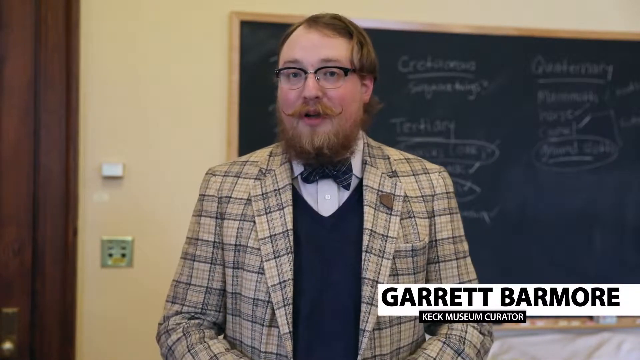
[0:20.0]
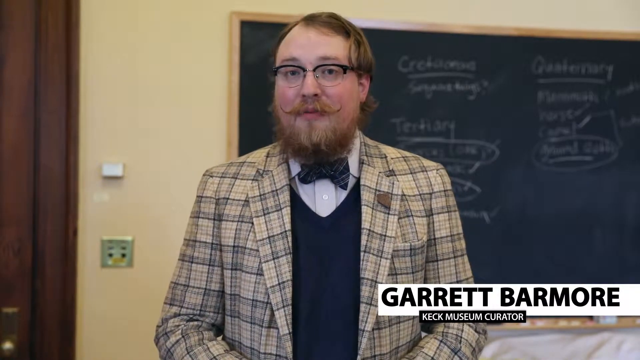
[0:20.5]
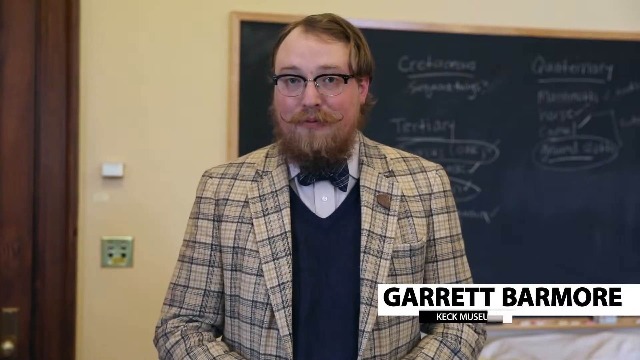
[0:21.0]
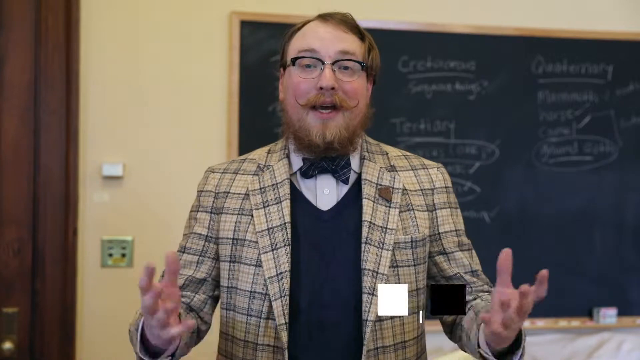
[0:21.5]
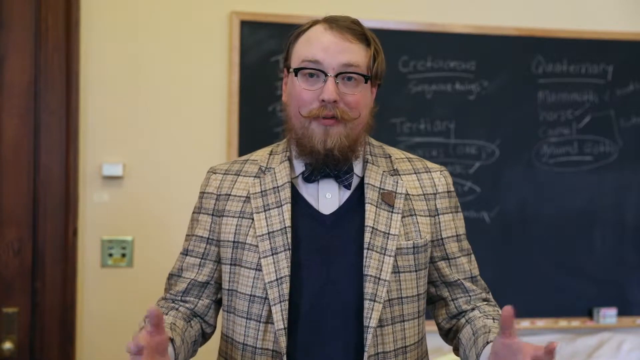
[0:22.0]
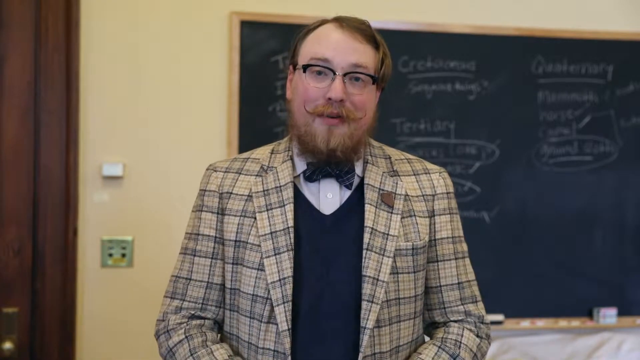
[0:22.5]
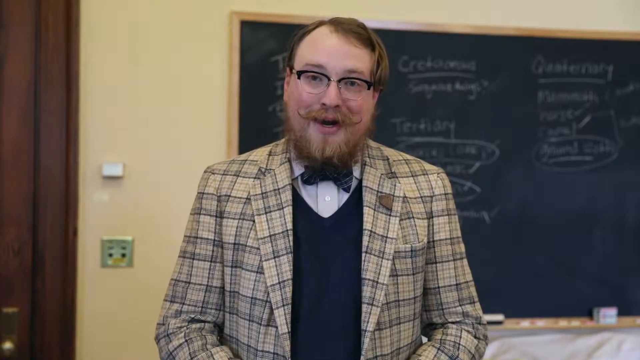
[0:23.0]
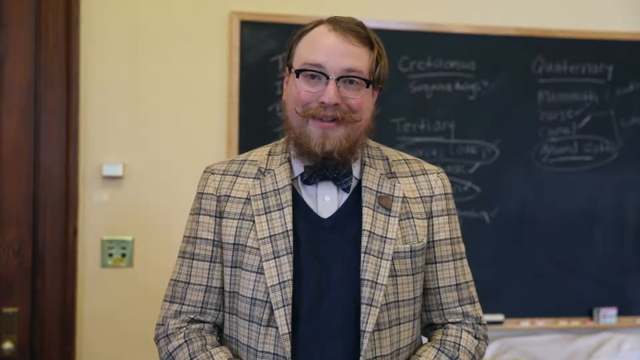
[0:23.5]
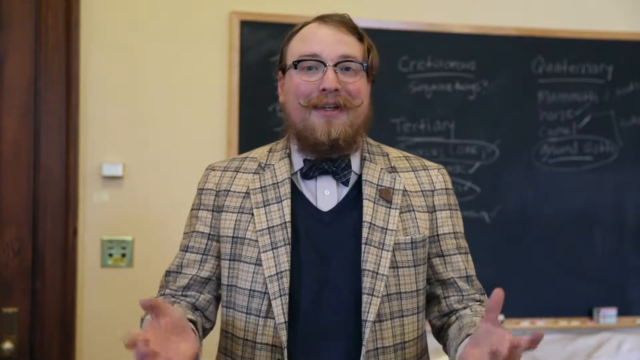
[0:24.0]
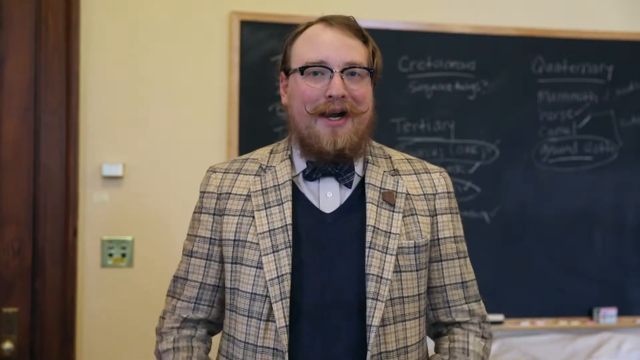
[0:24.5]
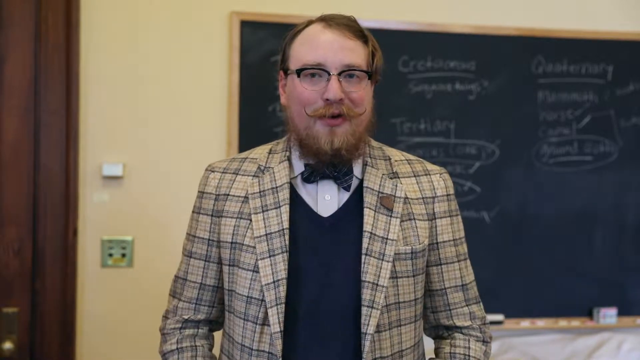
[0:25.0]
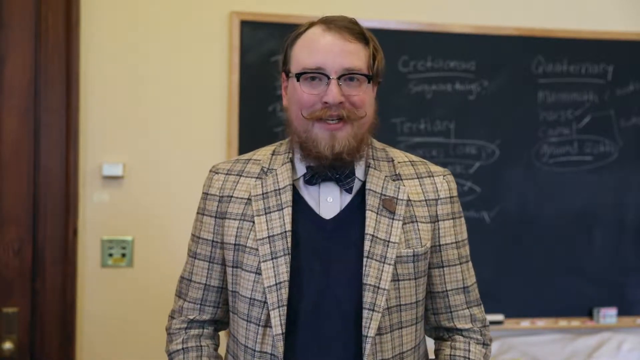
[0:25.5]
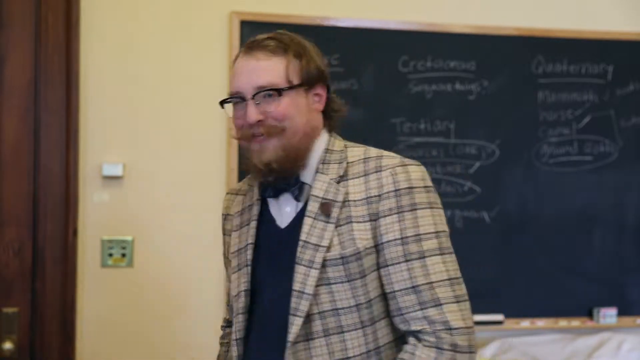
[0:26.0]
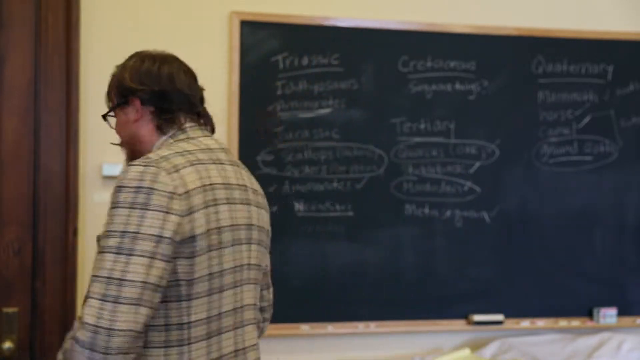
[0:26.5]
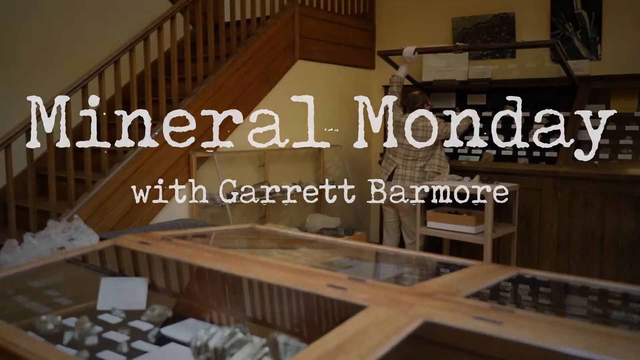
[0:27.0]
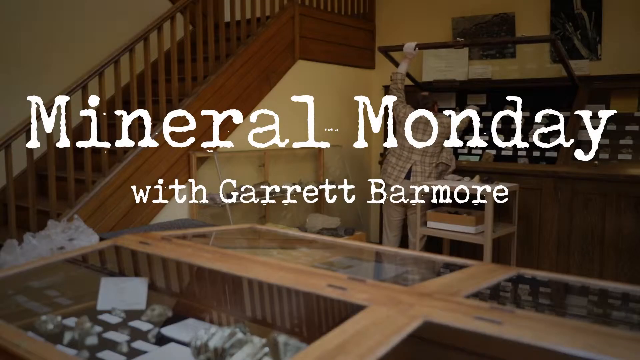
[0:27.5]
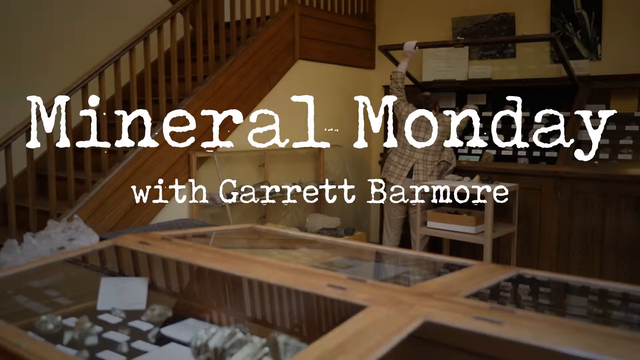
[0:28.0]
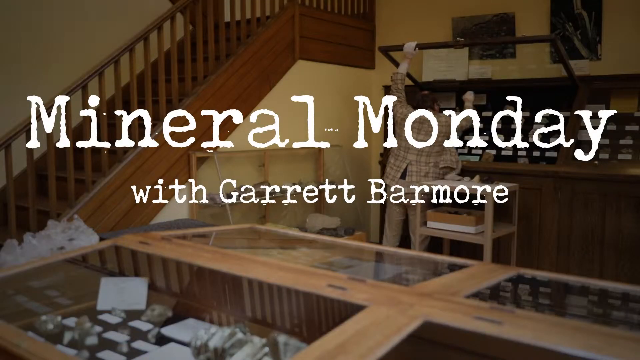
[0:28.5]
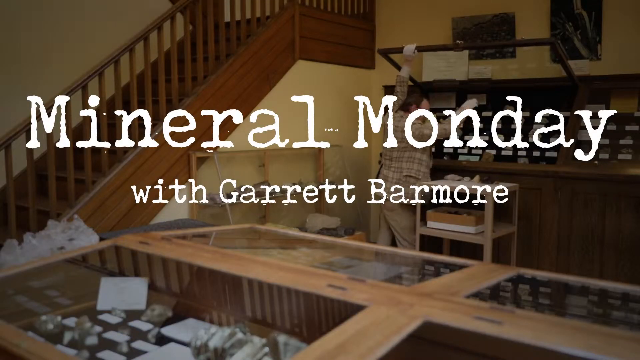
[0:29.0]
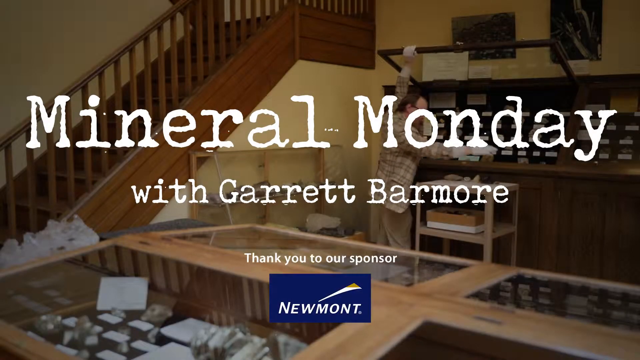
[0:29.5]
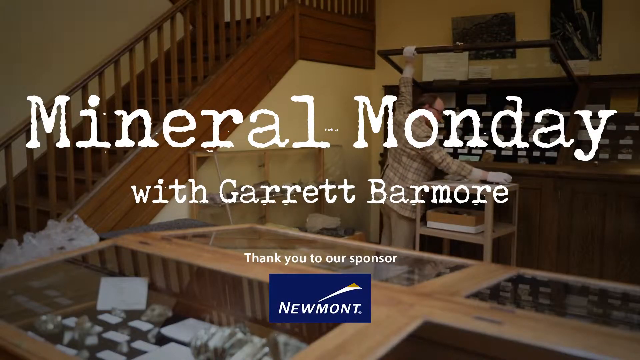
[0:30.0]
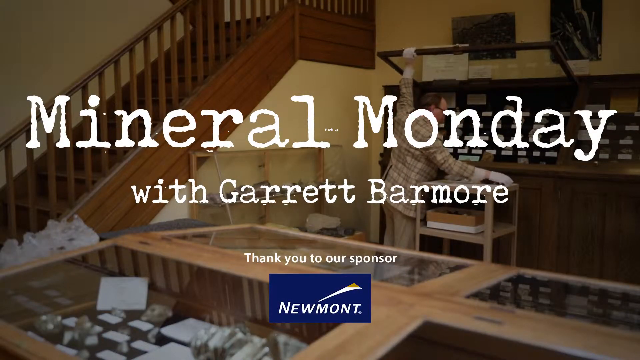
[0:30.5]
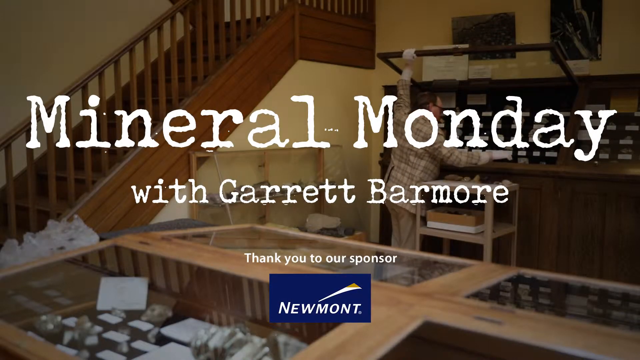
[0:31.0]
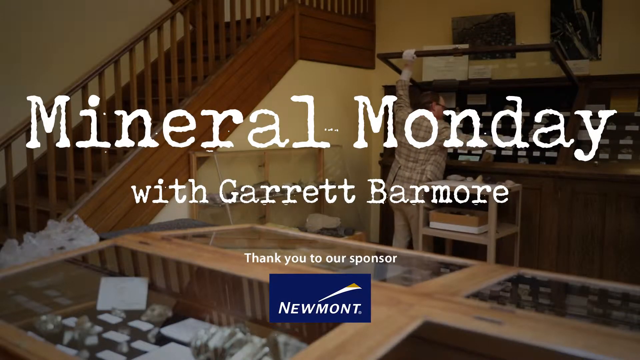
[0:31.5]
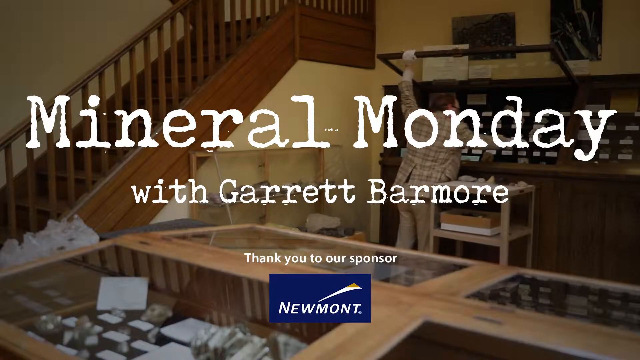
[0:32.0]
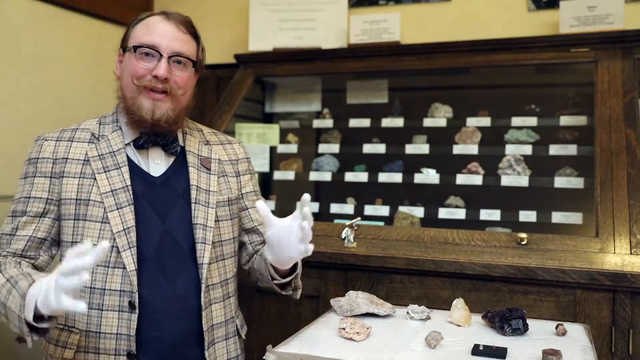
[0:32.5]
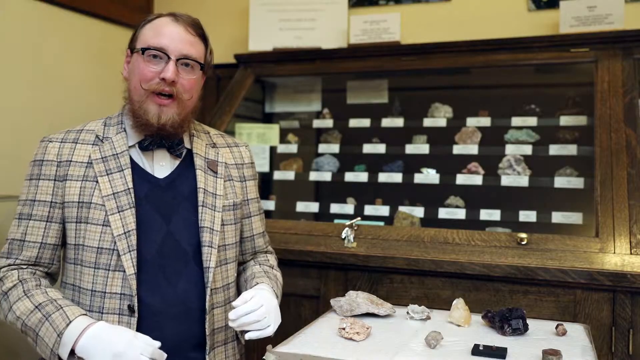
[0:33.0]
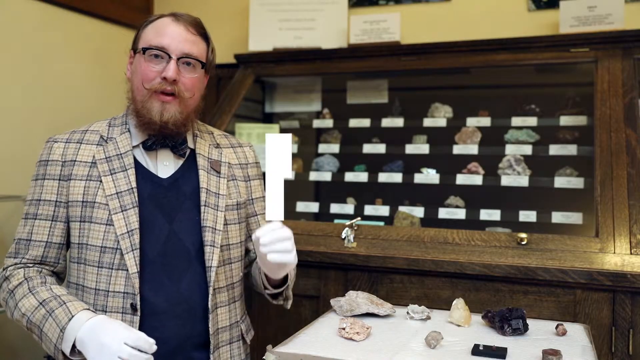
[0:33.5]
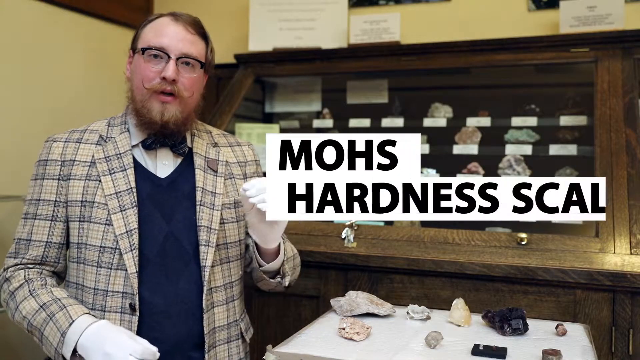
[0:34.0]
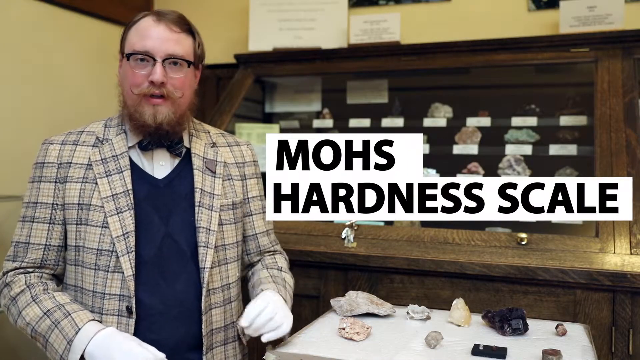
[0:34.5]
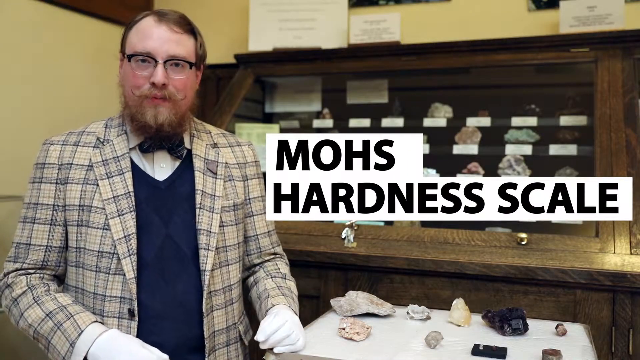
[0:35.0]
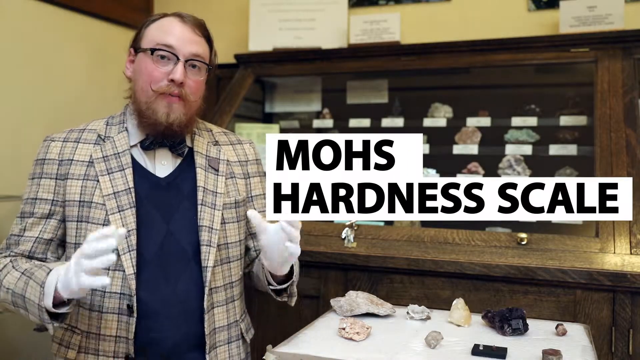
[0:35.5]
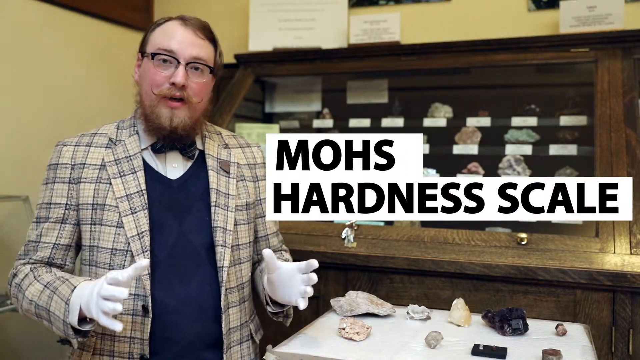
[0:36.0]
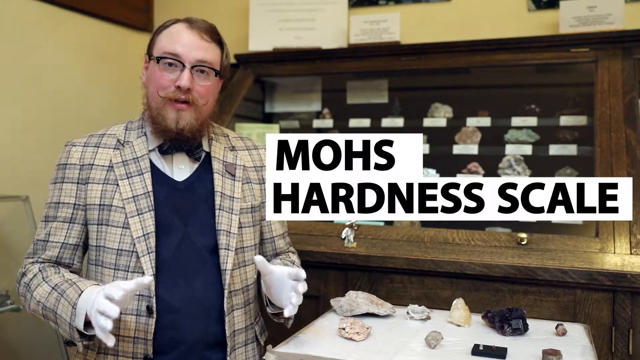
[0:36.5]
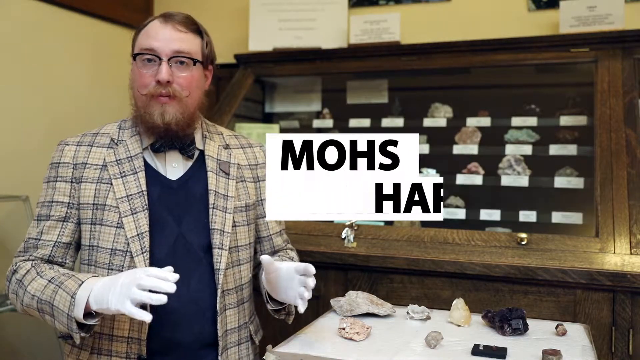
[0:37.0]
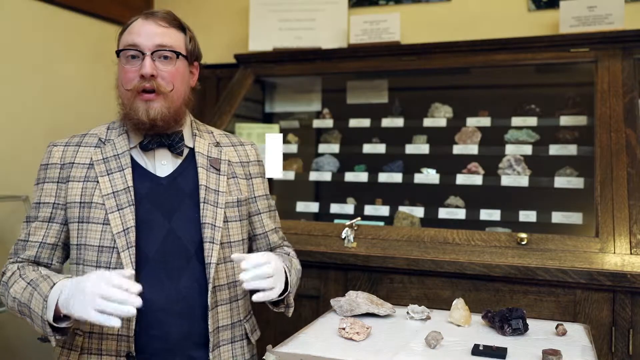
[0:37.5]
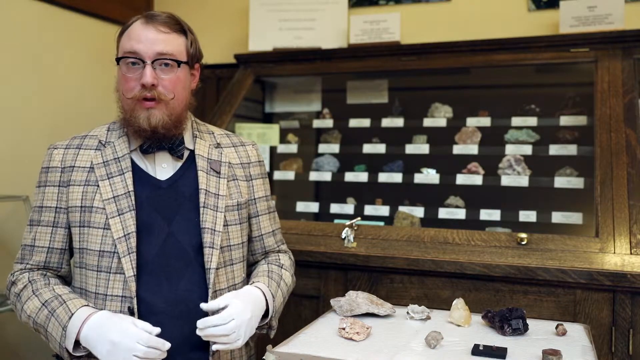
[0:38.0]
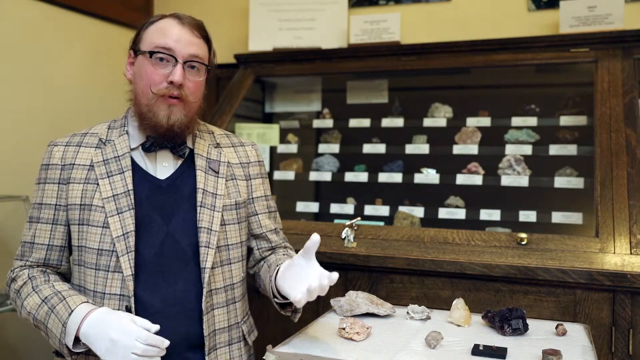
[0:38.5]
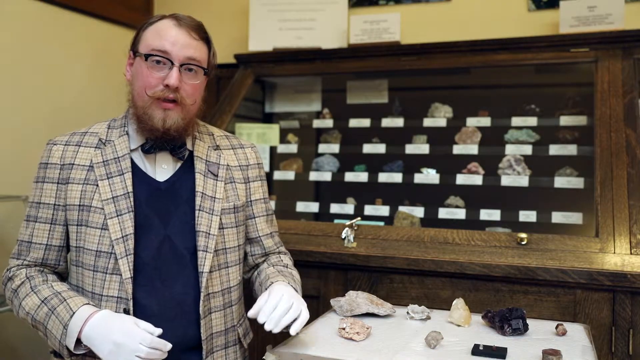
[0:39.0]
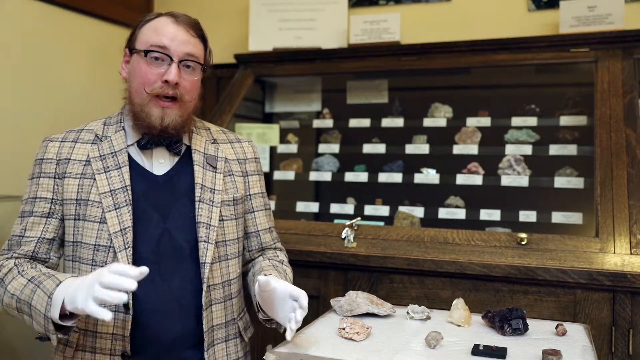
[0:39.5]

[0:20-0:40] A caption in black capital letters on a white background appears in the bottom right corner with the man's name, "Garrett Barmore", and beneath it, in white capital letters in a black square, "Keck Museum Curator". The man keeps talking to the camera, waving his arms to emphasise his words, spreading them out and back. The scene changes to a broader view of a museum, and a caption in white letters appears in the middle of the screen: "Mineral Monday with Garrett Barmore". On the left is a flight of stairs in dark brown wood with a wooden banister. Against the rear wall is a glass-fronted wooden cabinet, hinged at the top, which Garrett Barmore swings open; it contains museum exhibits, rocks with white paper labels. In the foreground are further free-standing wooden cabinets with glass tops. There are also two pictures on the rear wall and a small trolley with a cardboard box on it in front of the rear cabinets. Garrett Barmore talks to the camera, emphasising his words with his arms; he wears white cotton gloves. A caption in black capital letters on a white background appears on the middle right, reading "Mohs Hardness Scale", and then fades out.